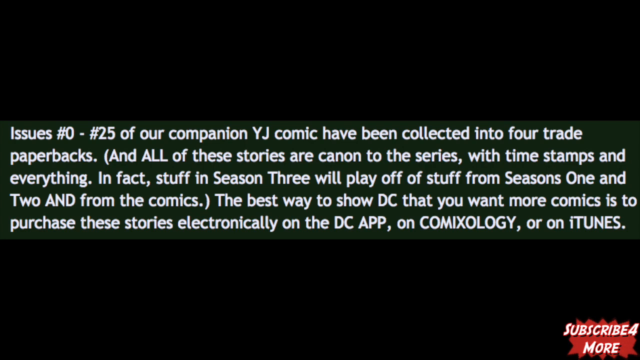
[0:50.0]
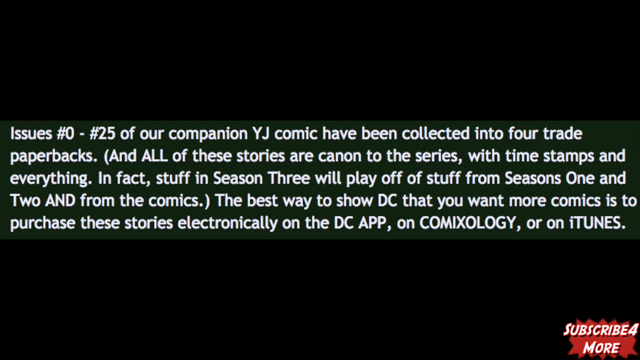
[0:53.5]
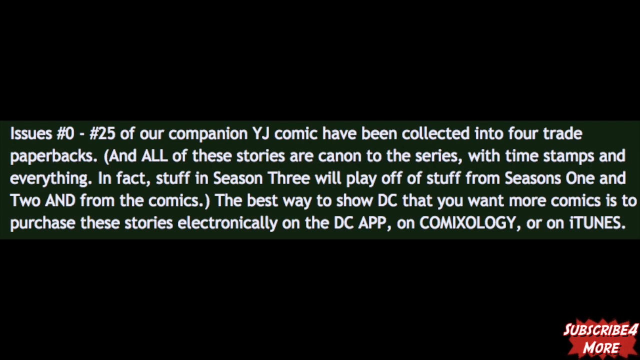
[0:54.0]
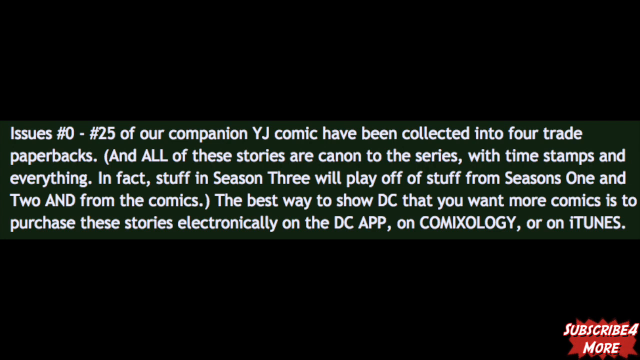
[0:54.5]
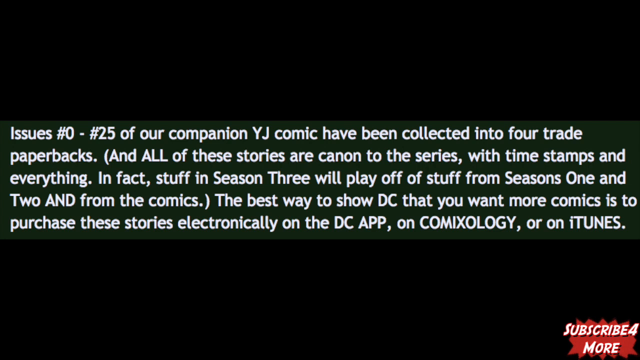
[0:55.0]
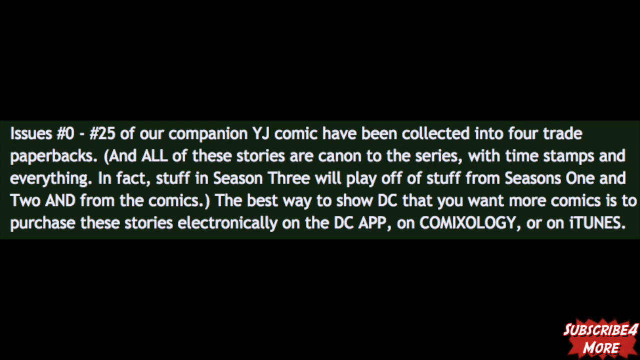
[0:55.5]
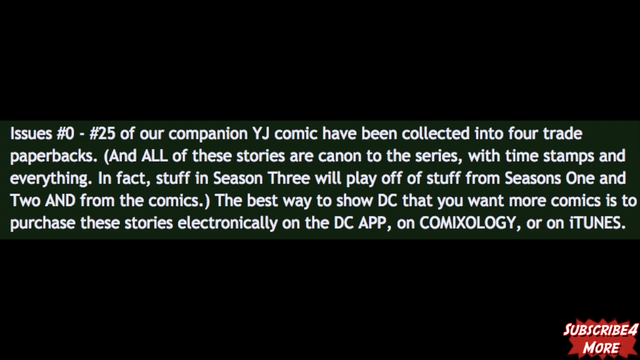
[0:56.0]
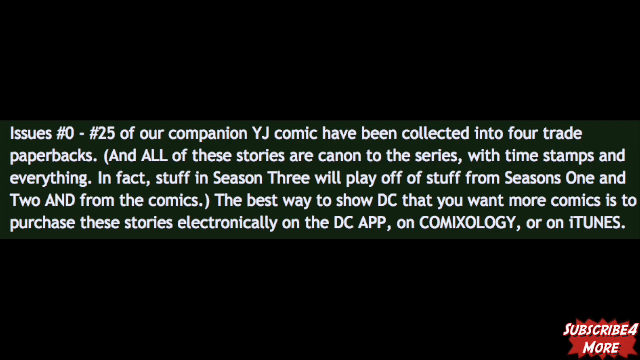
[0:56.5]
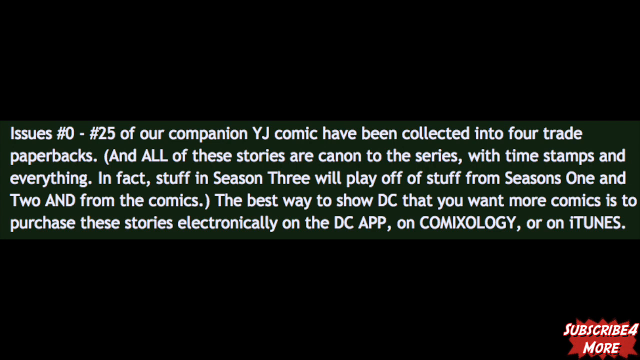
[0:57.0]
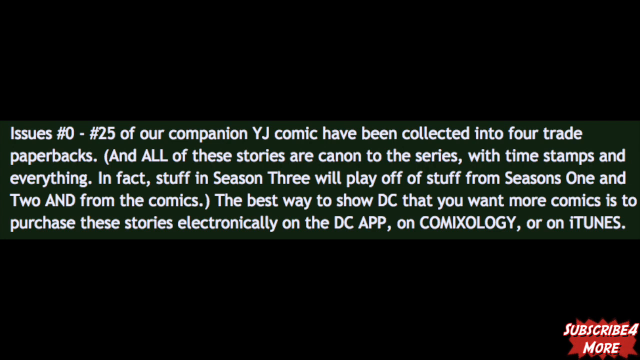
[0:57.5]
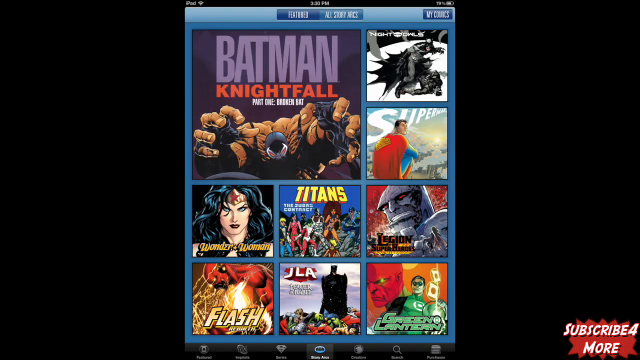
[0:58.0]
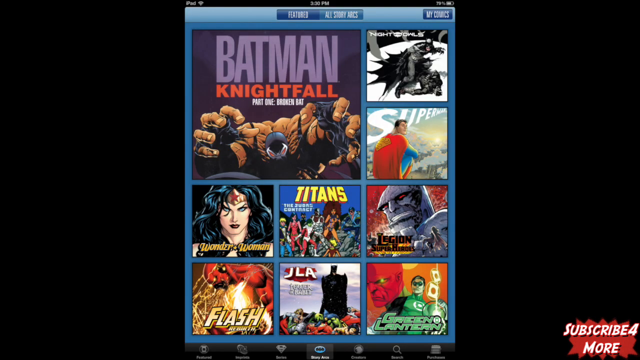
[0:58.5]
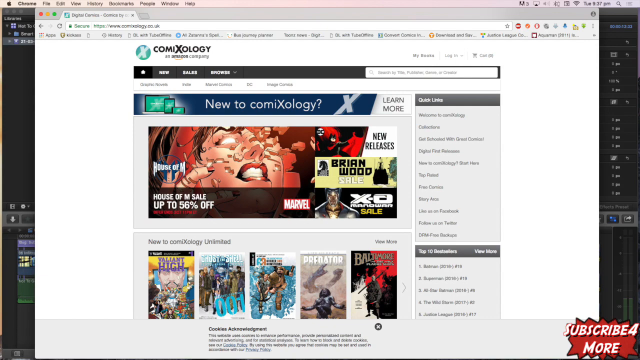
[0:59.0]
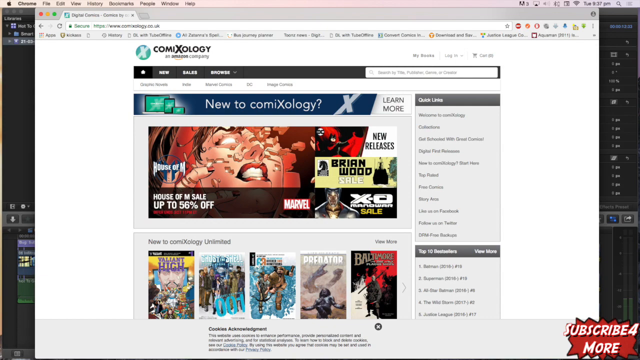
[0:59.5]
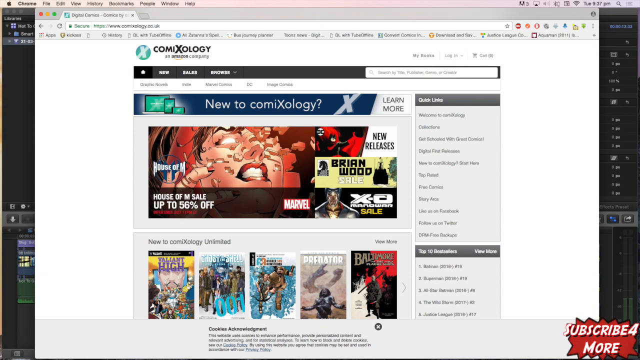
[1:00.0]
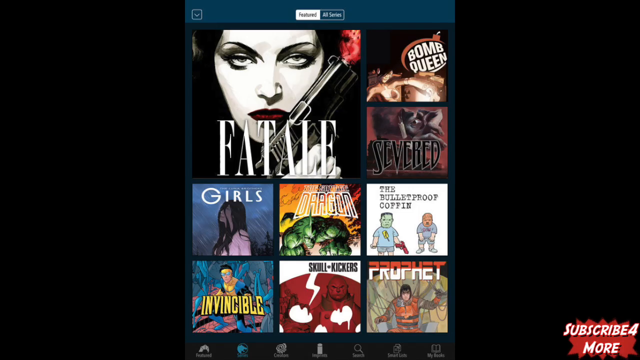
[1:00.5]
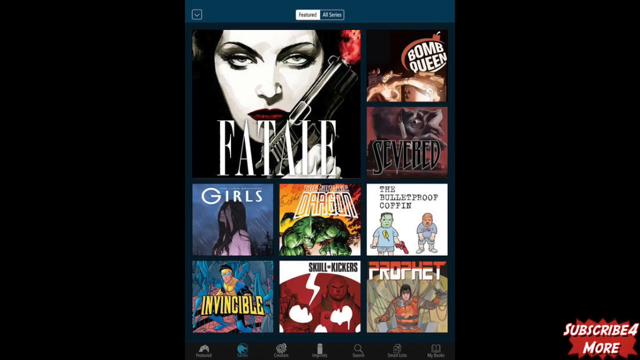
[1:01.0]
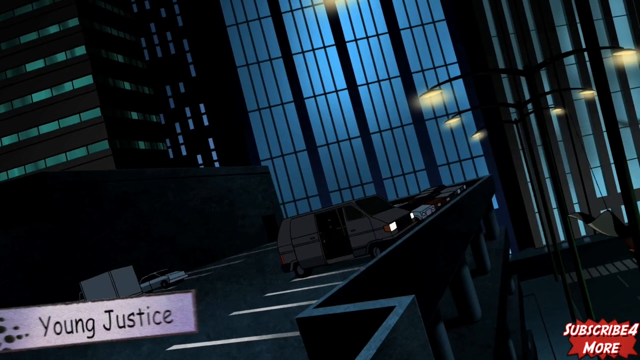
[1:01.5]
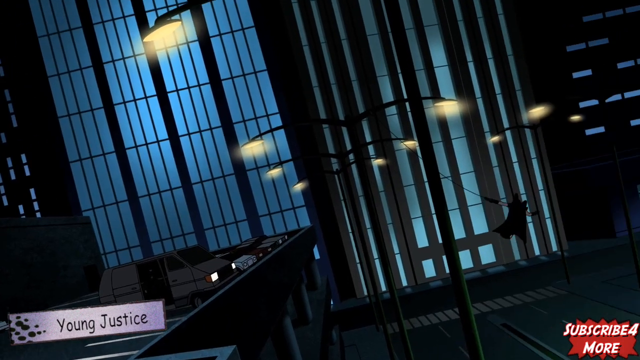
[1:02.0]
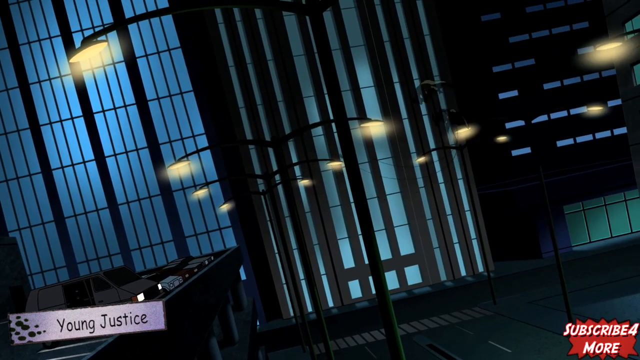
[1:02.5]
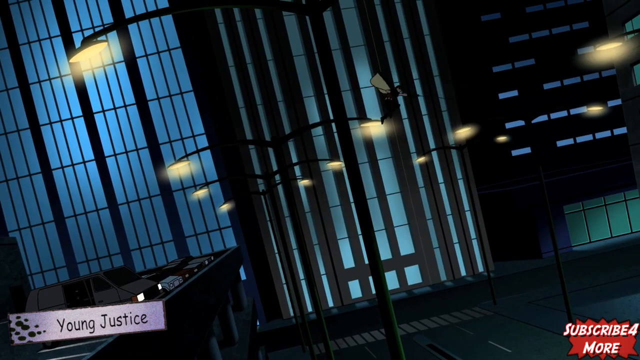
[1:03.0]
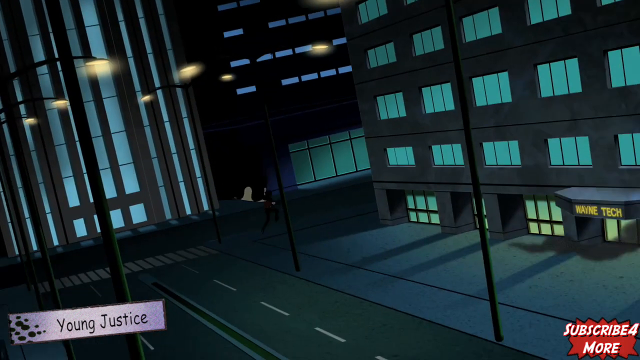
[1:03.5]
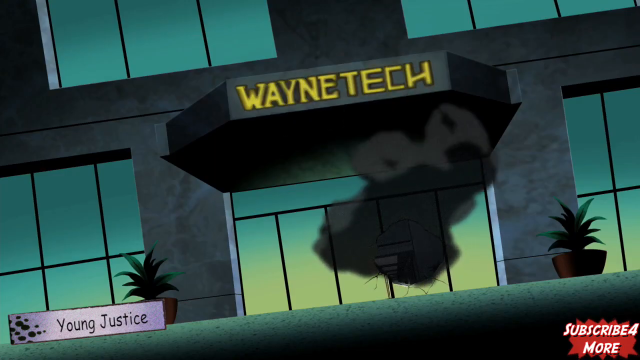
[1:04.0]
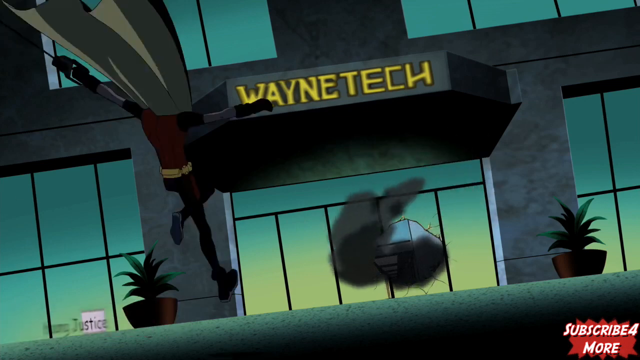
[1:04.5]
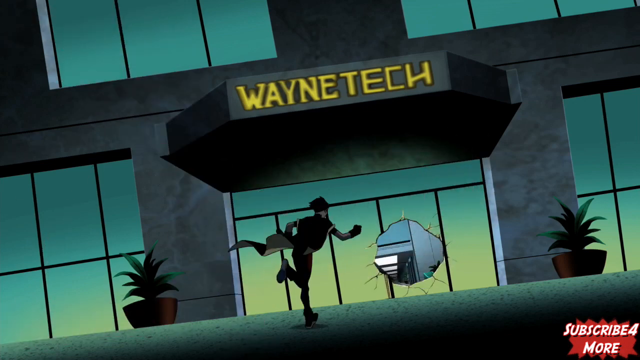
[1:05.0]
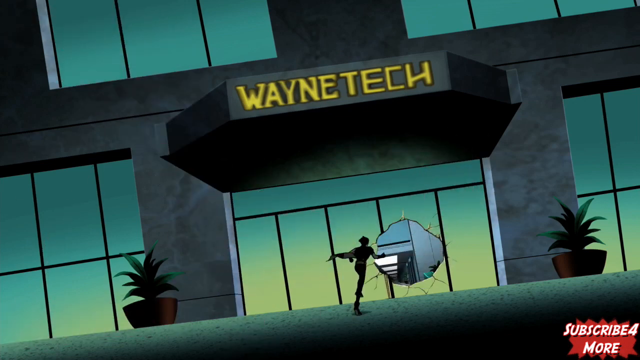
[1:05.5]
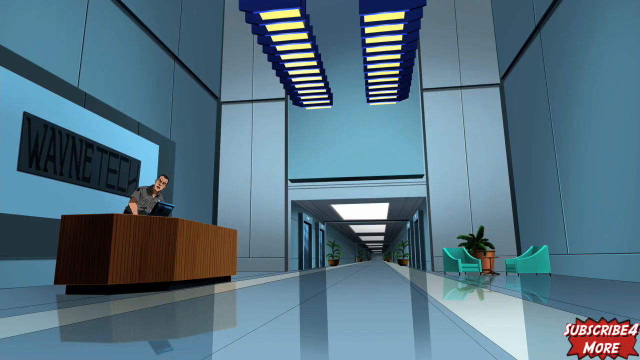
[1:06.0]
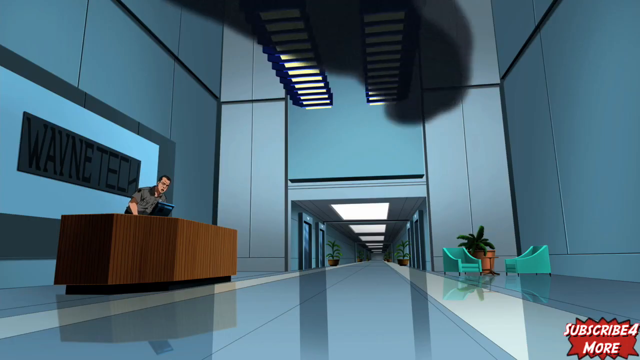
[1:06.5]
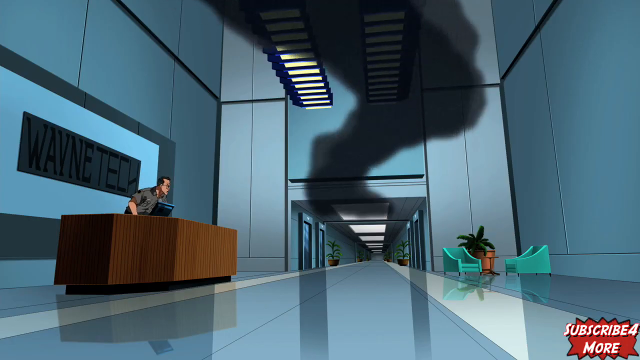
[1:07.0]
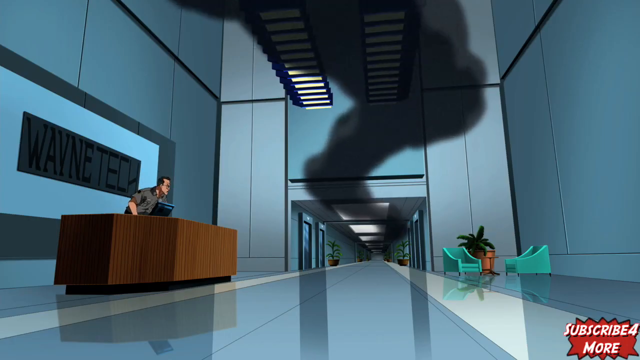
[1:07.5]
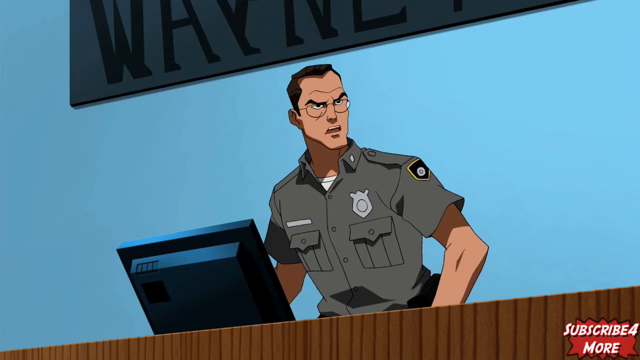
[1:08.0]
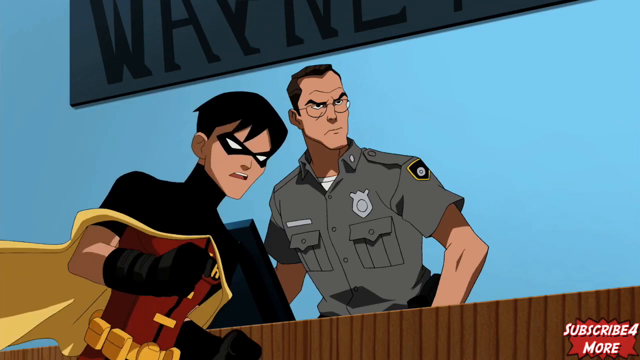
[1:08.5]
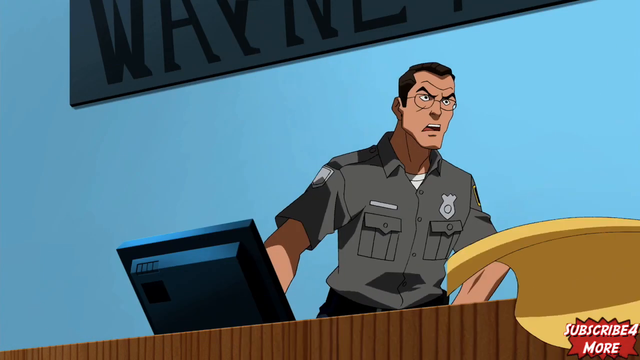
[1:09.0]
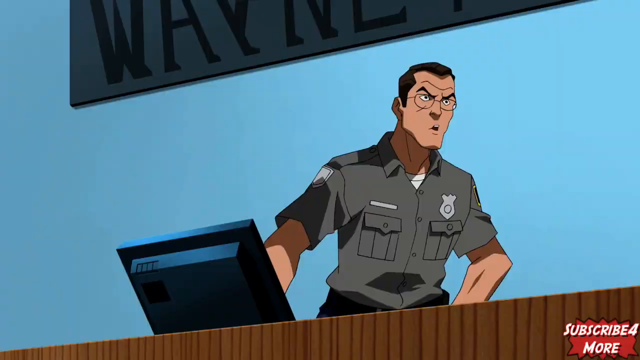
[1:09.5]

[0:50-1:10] A caption states that 25 issues of the Young Justice comics are available and that they have been collected into four trade paperbacks. Next comes an image of what looks like comic covers, seemingly a screenshot of someone's phone, with different screenshots of different characters such as Batman, The Flash and Wonder Woman. A screen of the website Cosmology shows different banners and thumbnails of different types of comic books and characters. The view cuts to another screen of thumbnails laid out in a tile pattern; one, called Fatal, shows a woman who is almost black and white, with red lips, holding a gun at an angle, and it is larger than the thumbnails around it. The video then cuts to a dark scene of many high rises; the view slides to the right, and a lot of street lights are out. A character with a cape flies up in the air in front of a building, then lands by crashing into the building. Above the awning the name reads "Wayne Tech". The caped person follows through the hole into the building. Inside, the lobby is very tall, with a tiled floor. A security guard in uniform leans over and looks to the right and then to the left, following a trail of black smoke down the hall. The guard comments as Robin enters the screen; Robin dashes off, and the security guard leans forward and says something.